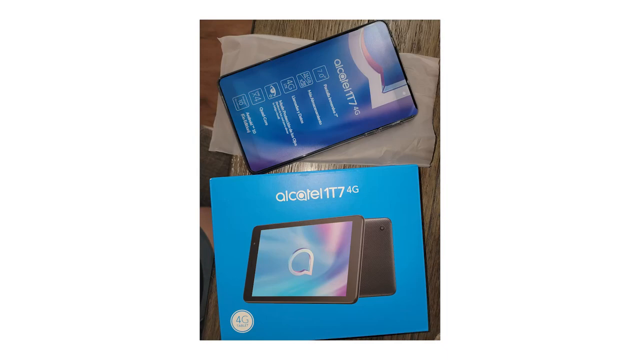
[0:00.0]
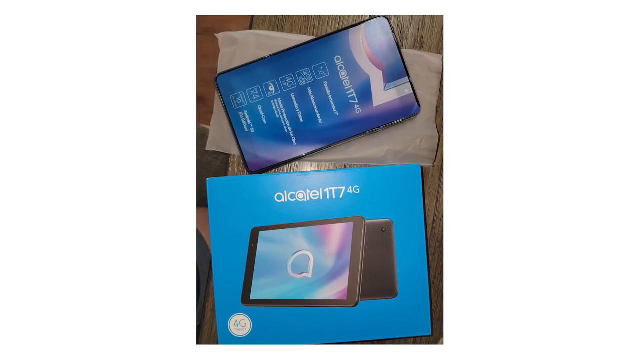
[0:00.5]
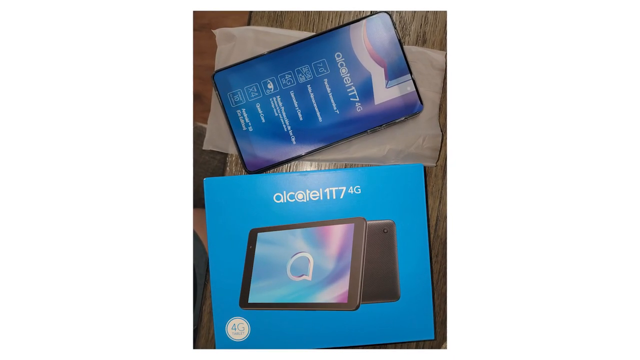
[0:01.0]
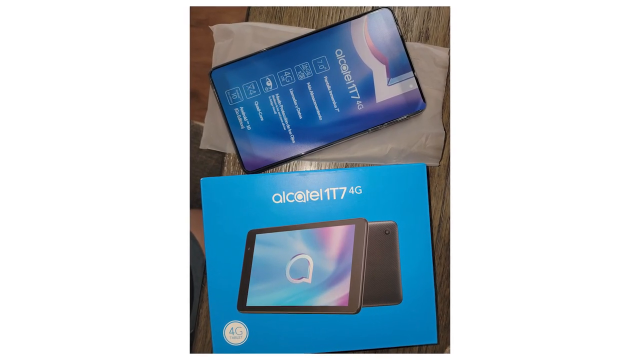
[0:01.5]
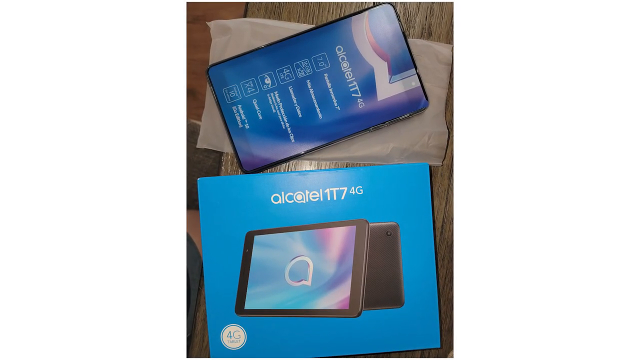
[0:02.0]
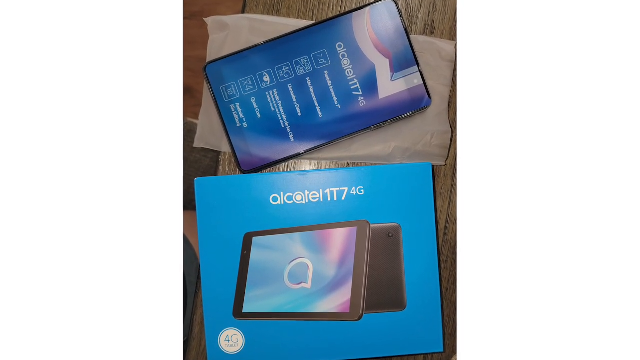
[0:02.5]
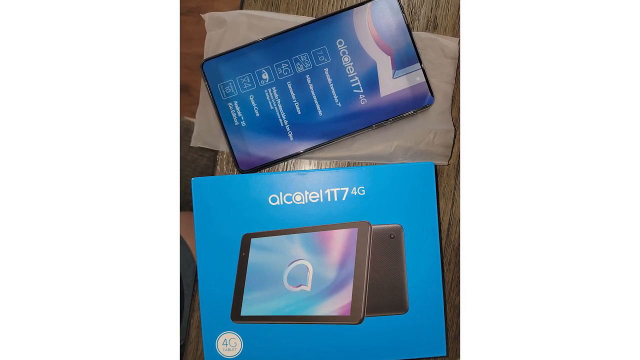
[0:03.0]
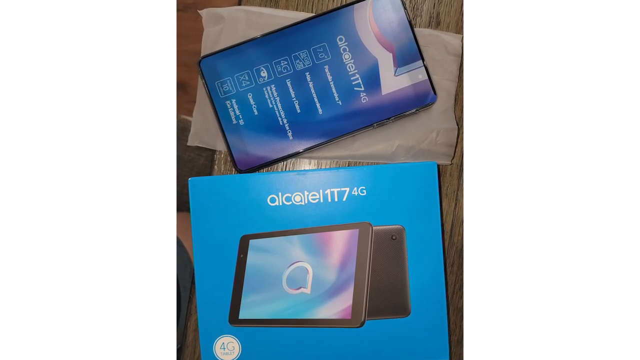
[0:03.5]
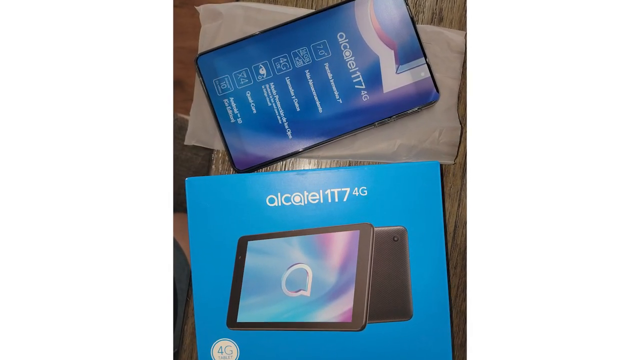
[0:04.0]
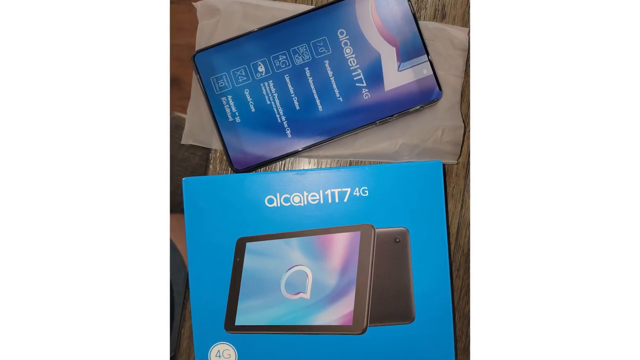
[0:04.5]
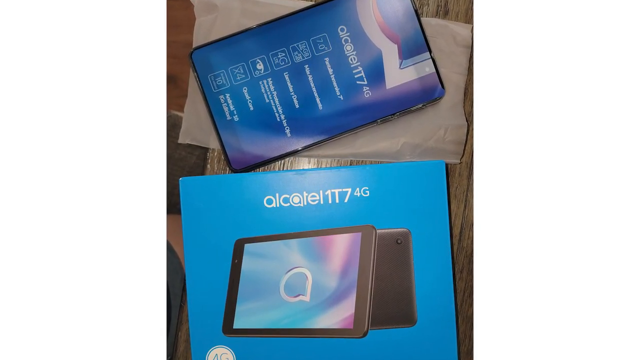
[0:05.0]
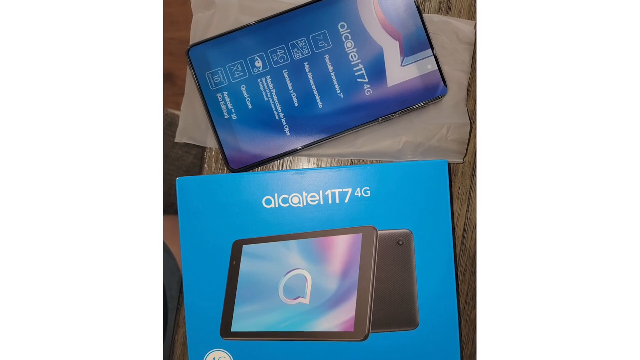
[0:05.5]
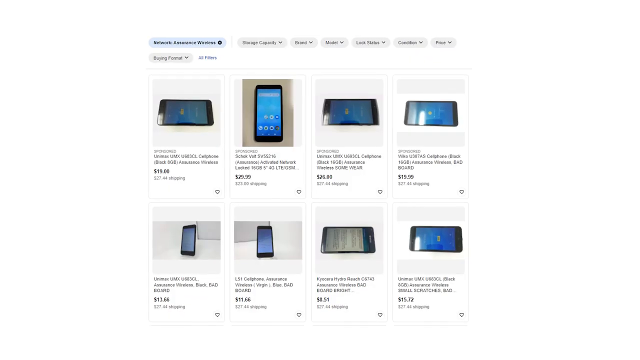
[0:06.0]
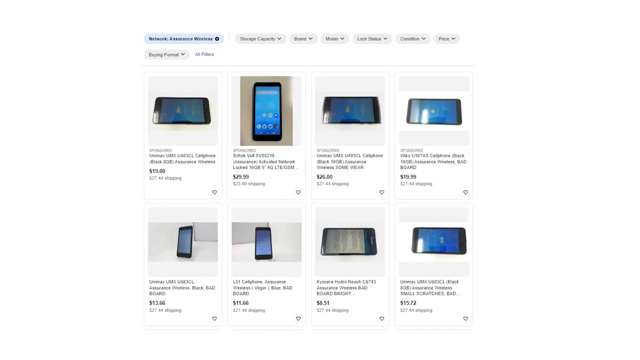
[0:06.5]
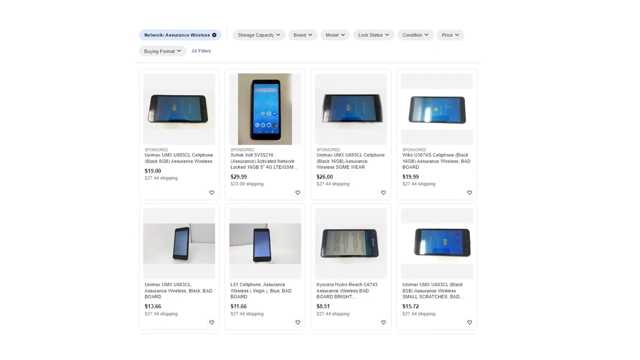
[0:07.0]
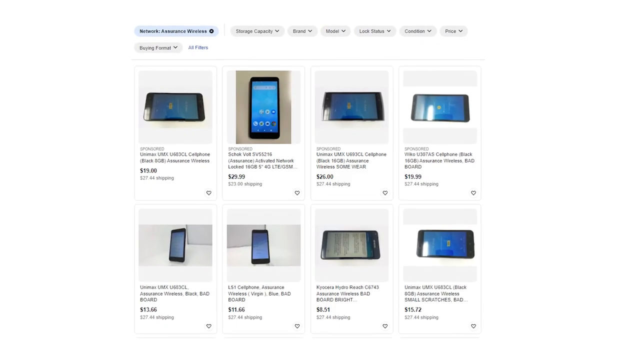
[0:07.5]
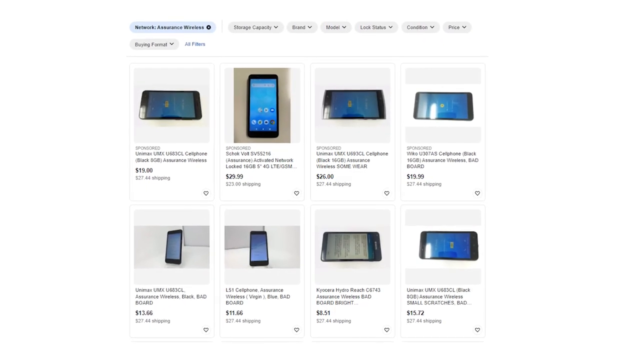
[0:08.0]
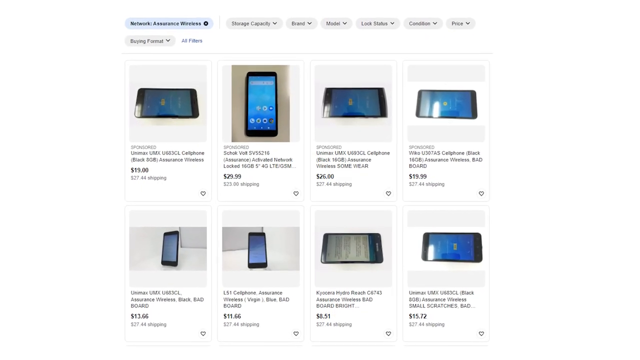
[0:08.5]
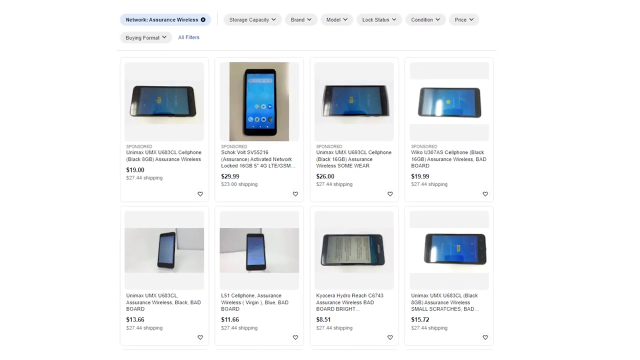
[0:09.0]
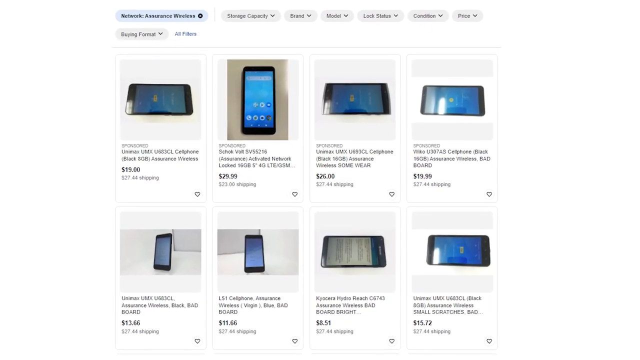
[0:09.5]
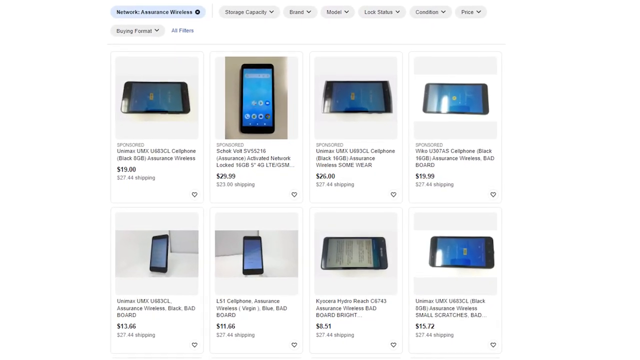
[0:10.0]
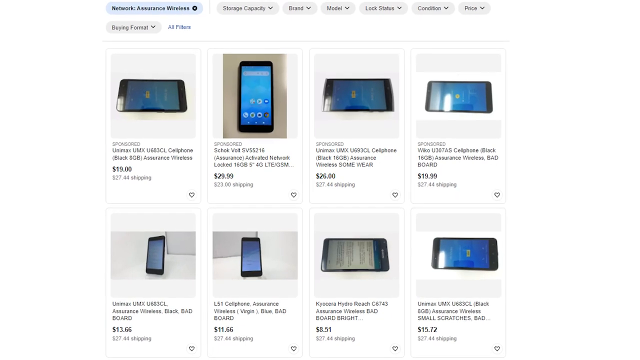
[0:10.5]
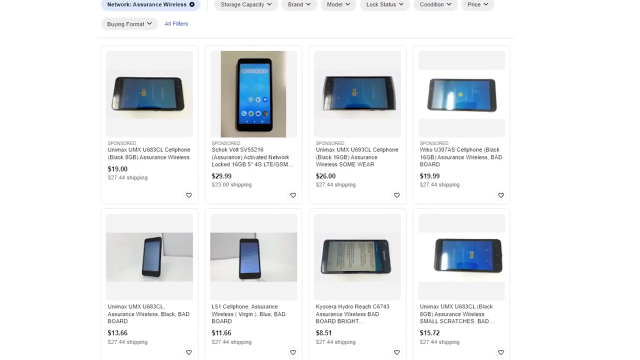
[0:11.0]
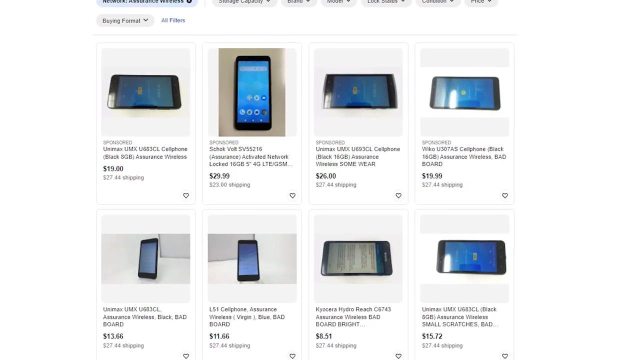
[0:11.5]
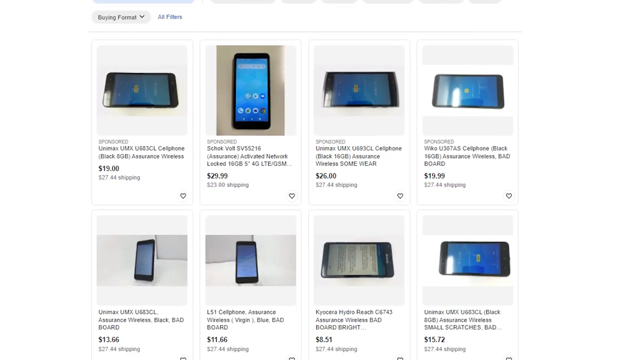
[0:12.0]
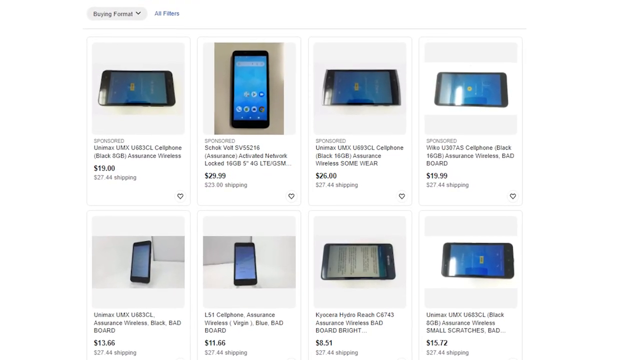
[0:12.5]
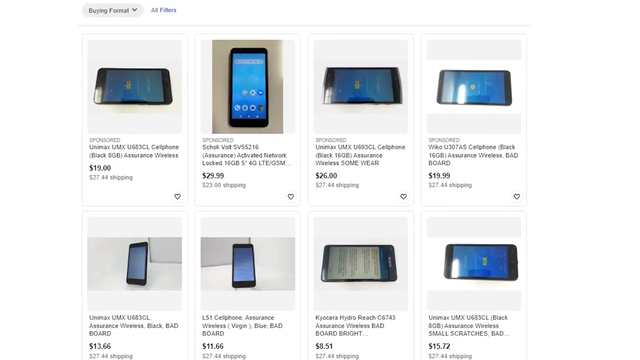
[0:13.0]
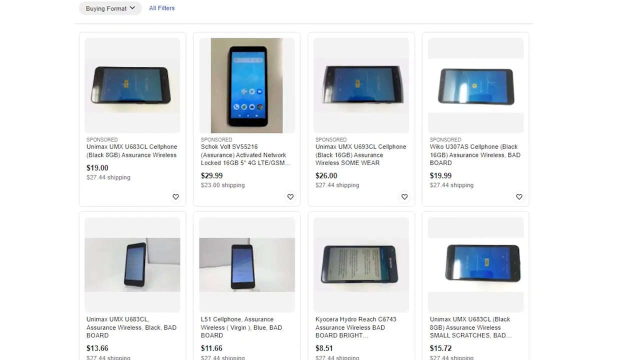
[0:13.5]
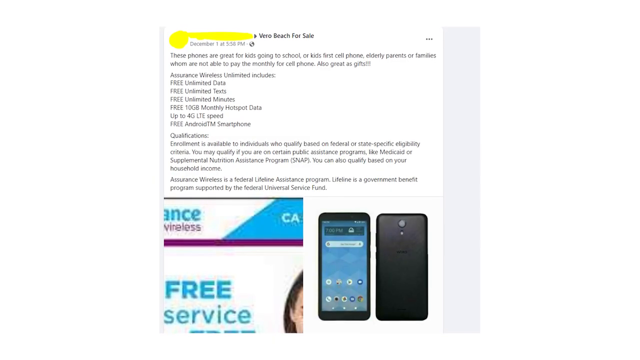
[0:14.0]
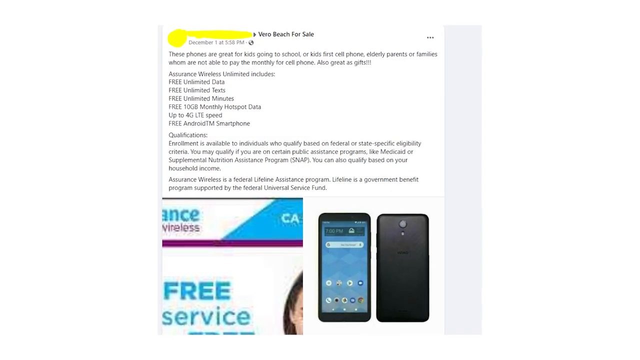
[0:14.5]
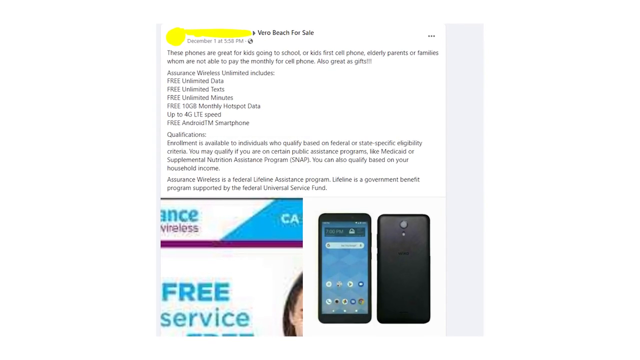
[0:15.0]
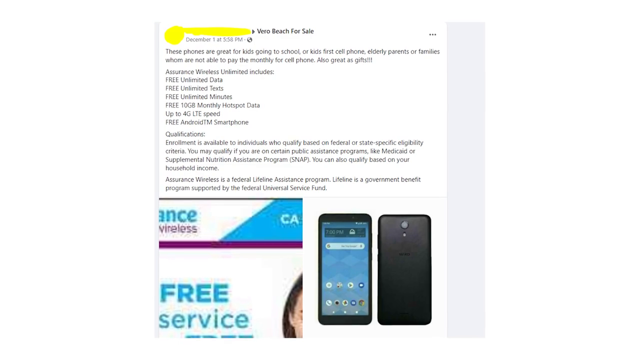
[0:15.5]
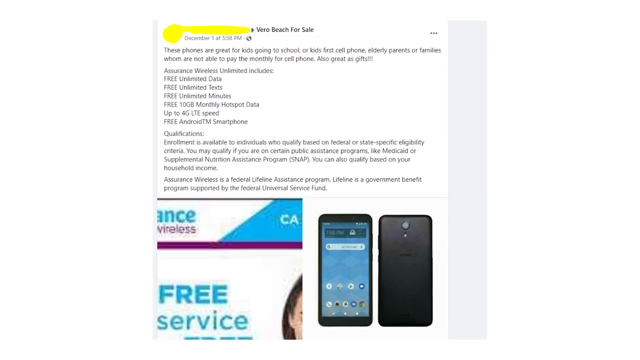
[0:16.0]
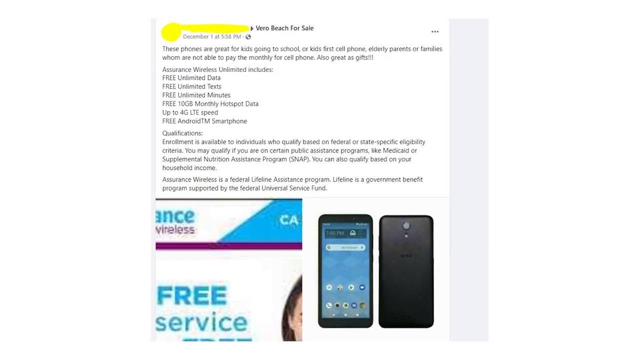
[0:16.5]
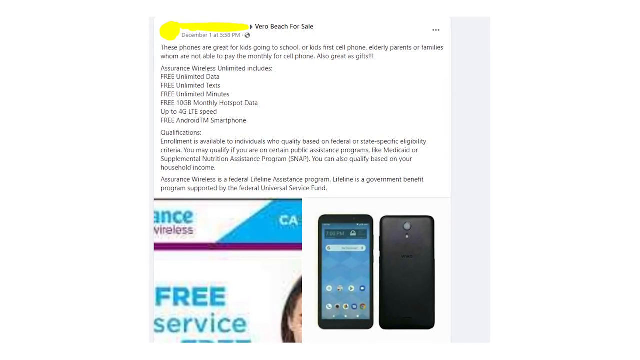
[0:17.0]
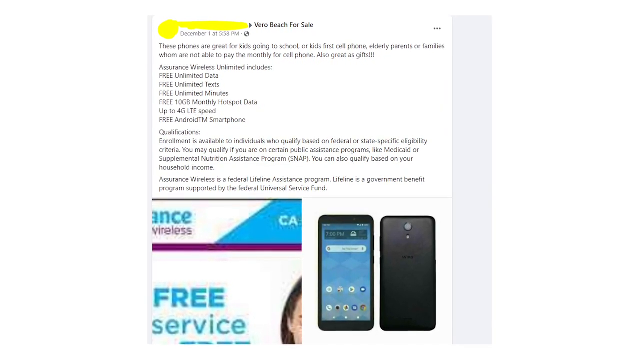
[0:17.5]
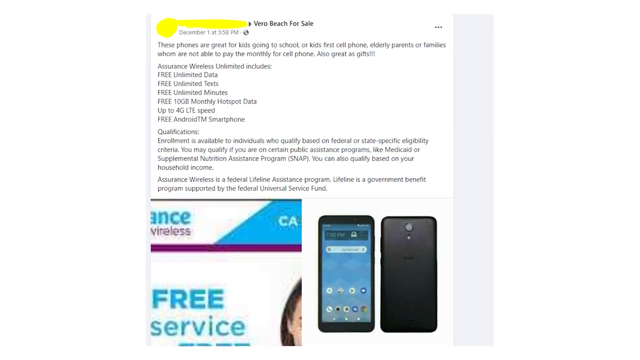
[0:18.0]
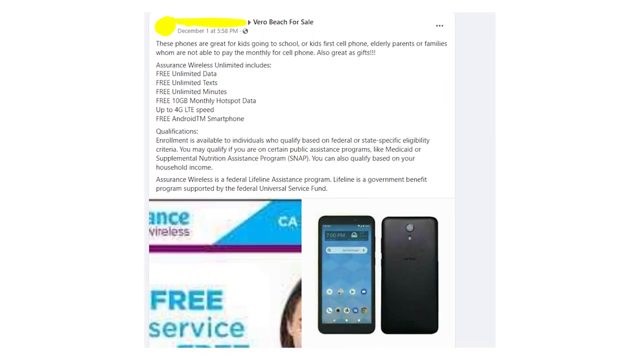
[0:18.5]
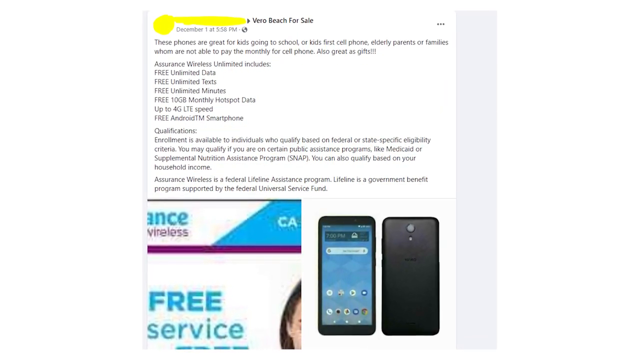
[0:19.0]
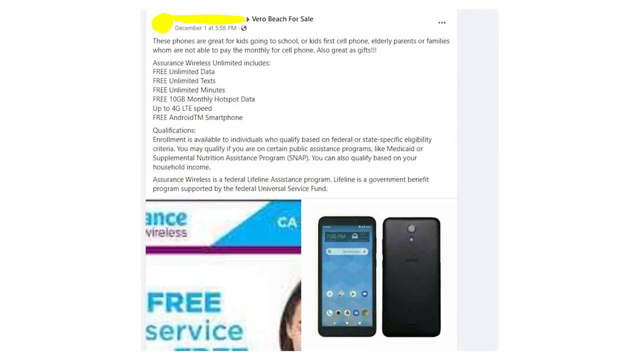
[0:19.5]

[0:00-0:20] The video opens with a slideshow-style screenshot of an Android tablet that has been taken out of its box, with the device and the box laid out on a table. The device is an Alcatel 1T7 4G. The box is blue with a white blurring effect in the back. After a few moments on this image, the video cuts to a listing on a website selling new or used Android or smartphone devices from different brands. It is a static screenshot showing eight devices in total at different price points, from brands such as Unimax, Volt, Wilco, L51 and Kyocera, with prices ranging from $8.51 to $29.99 and similarly priced shipping options. Another cut leads to a new or used listing that states "Vero Beach for Sale", posted on December 1st at 5:58 p.m. The user's name is blurred out.